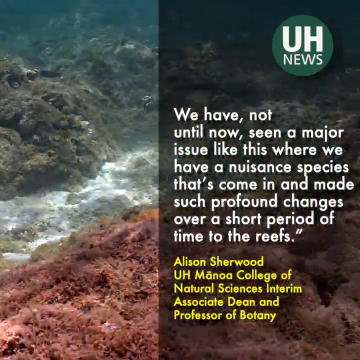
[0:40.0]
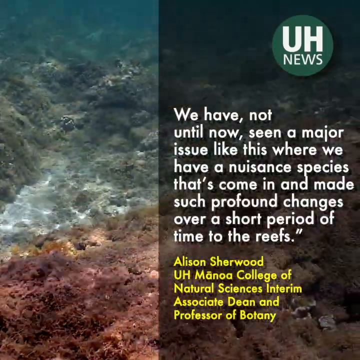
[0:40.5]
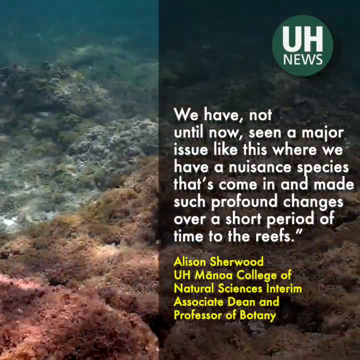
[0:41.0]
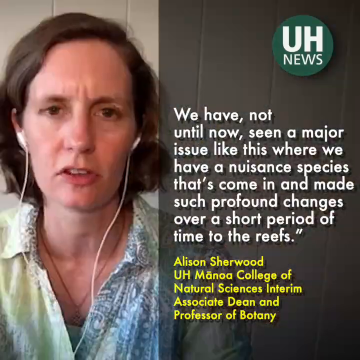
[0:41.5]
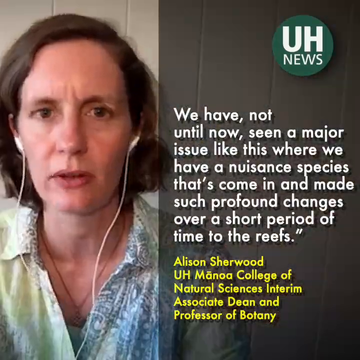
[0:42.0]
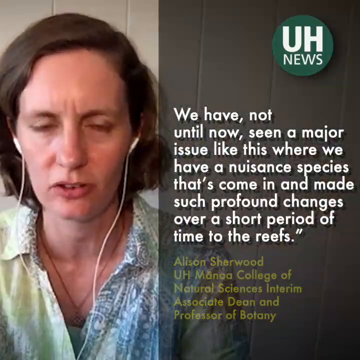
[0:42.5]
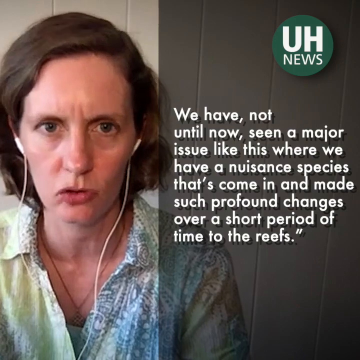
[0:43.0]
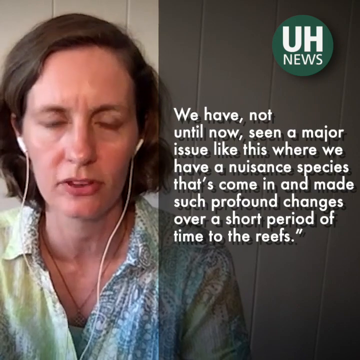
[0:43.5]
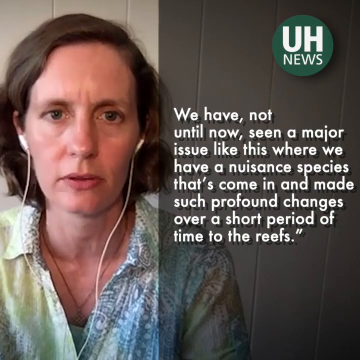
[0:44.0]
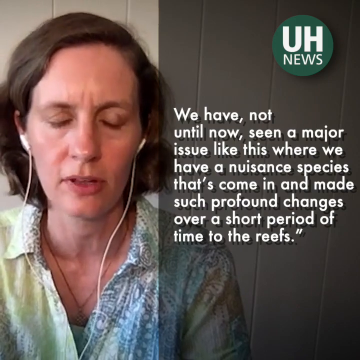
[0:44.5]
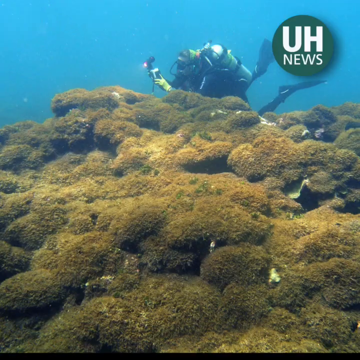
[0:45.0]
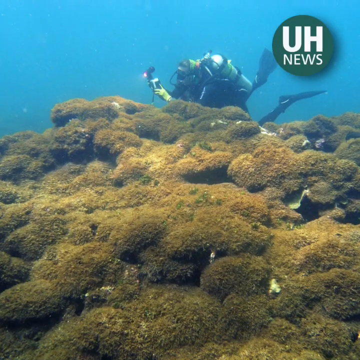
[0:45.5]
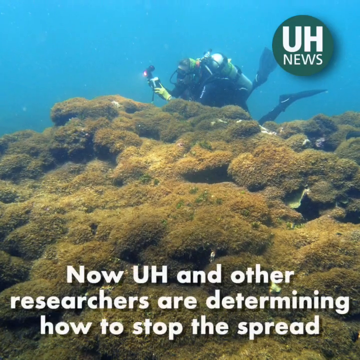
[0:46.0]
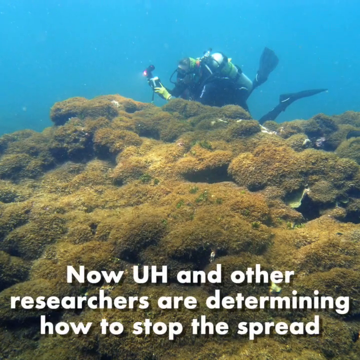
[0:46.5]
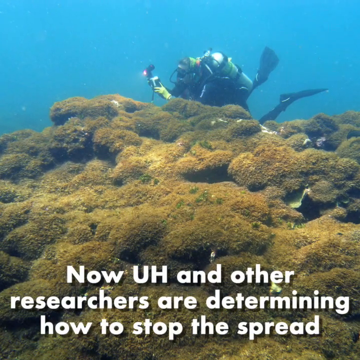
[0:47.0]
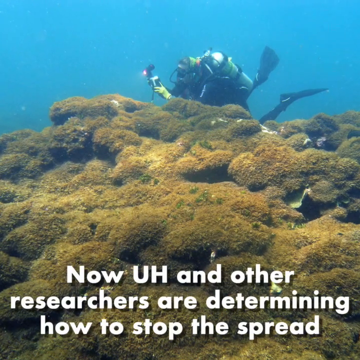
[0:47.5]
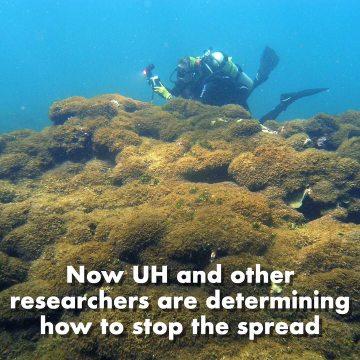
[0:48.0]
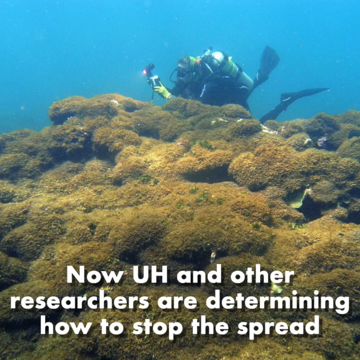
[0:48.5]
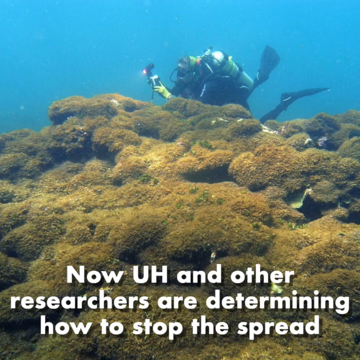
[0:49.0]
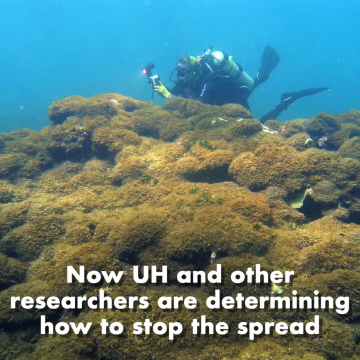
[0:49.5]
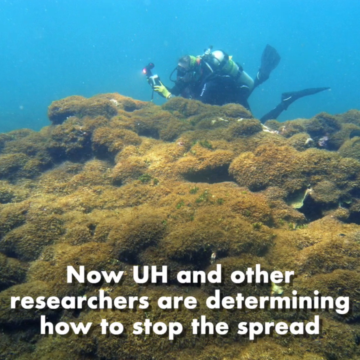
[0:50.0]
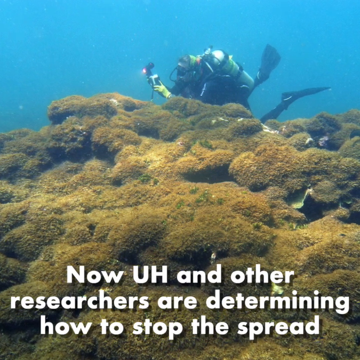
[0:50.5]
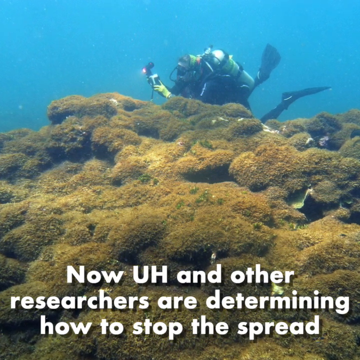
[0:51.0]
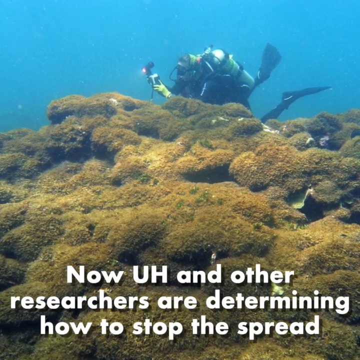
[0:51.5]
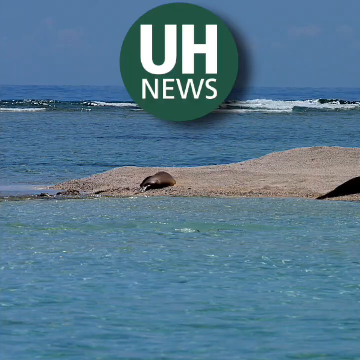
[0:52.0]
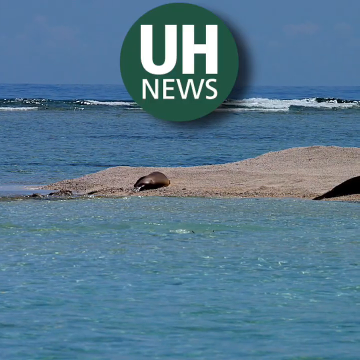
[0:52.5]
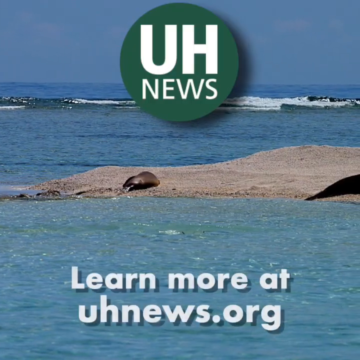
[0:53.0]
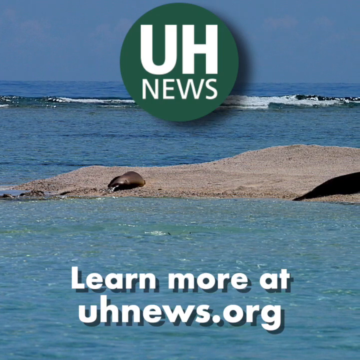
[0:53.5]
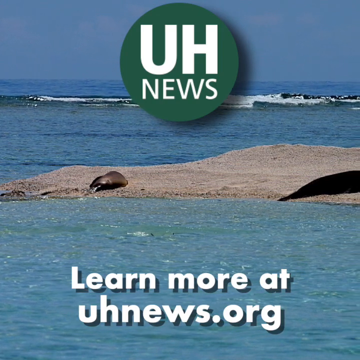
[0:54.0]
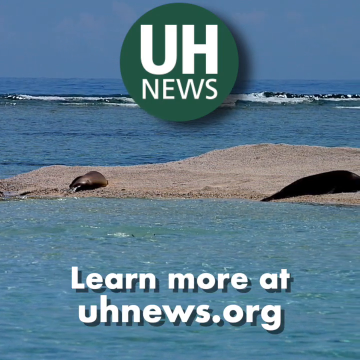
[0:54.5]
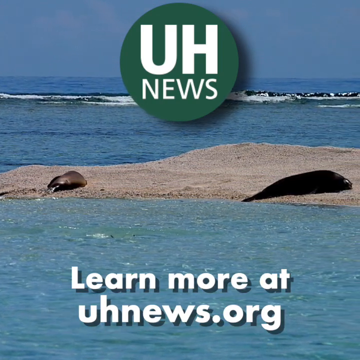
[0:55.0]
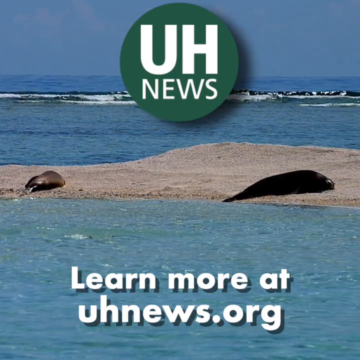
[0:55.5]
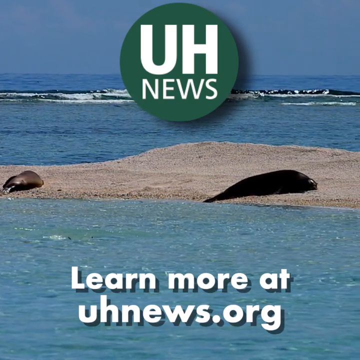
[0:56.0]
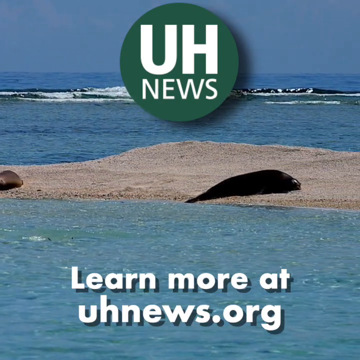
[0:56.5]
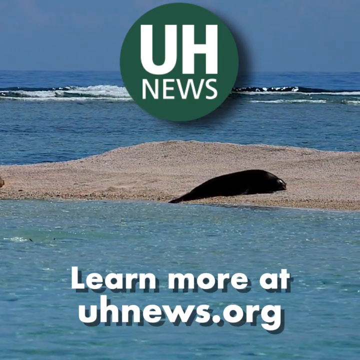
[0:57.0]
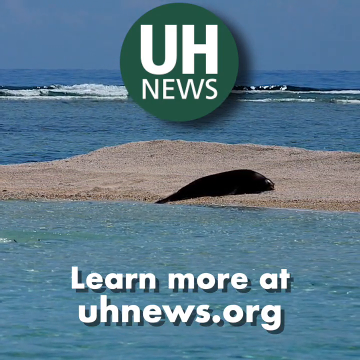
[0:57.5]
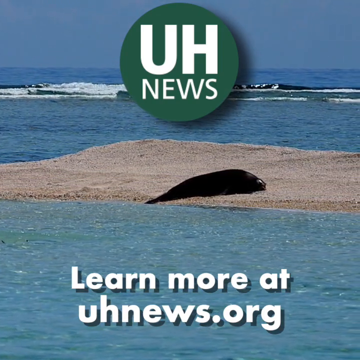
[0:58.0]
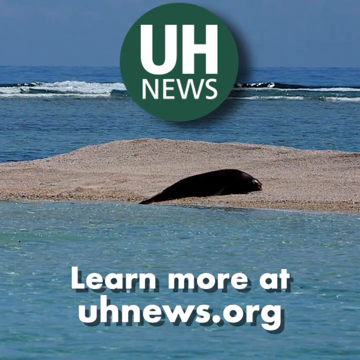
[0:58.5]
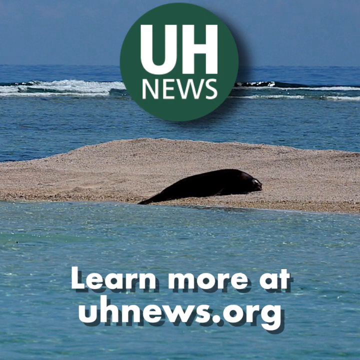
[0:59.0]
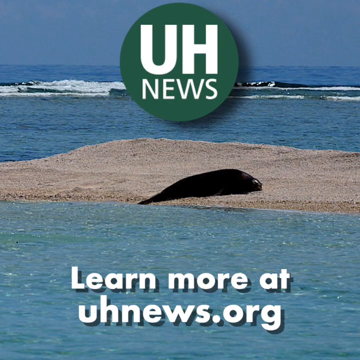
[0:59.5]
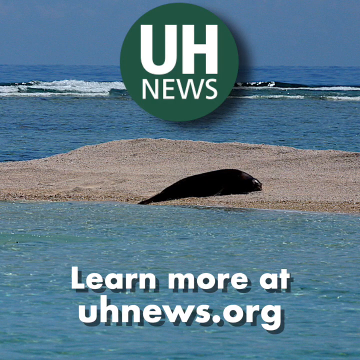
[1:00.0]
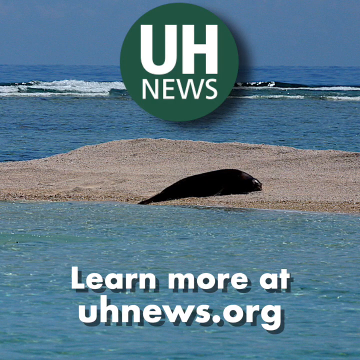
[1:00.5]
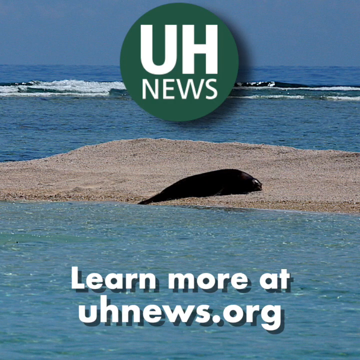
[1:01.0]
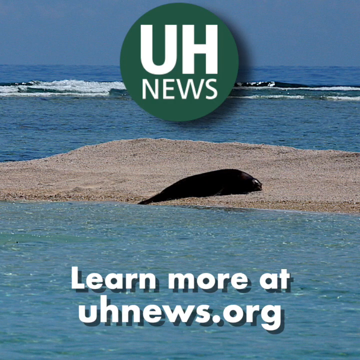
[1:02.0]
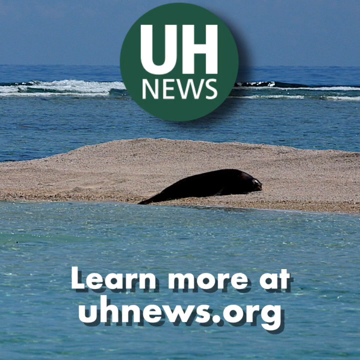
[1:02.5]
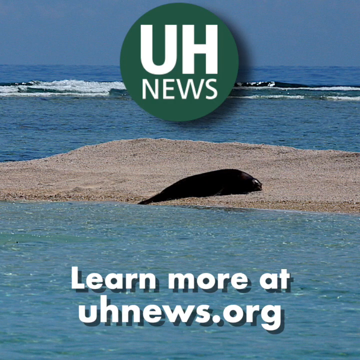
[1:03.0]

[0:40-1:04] Behind the quote, the camera continues to pan across the ocean floor, then the video cuts back to the woman speaking directly to the camera, with the quote still visible on the right-hand side of the screen. It then cuts to a still photograph of a diver photographing algae on the rocks or coral reef, with a caption at the bottom reading "Now UH and other researchers are determining how to stop the spread." Next is a photo of a seal sitting on a small landmass with water all around it and waves breaking in the distance. The UH News logo on a green circle is now in the top centre of the frame, and in the bottom centre is quite a large white caption reading "learn more at uhnews.org." The camera pans from left to right across the photograph, revealing another seal that looks to be asleep on the small landmass.